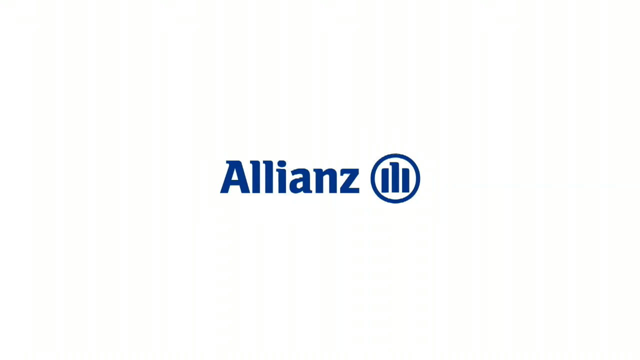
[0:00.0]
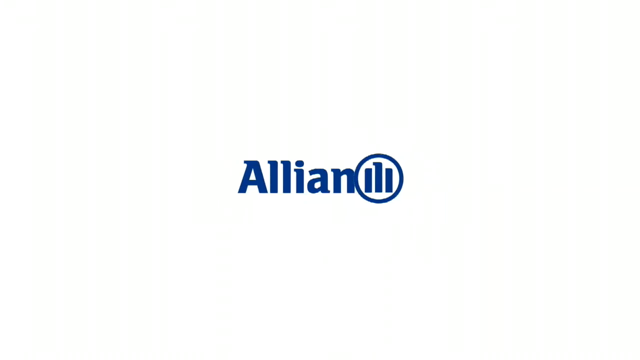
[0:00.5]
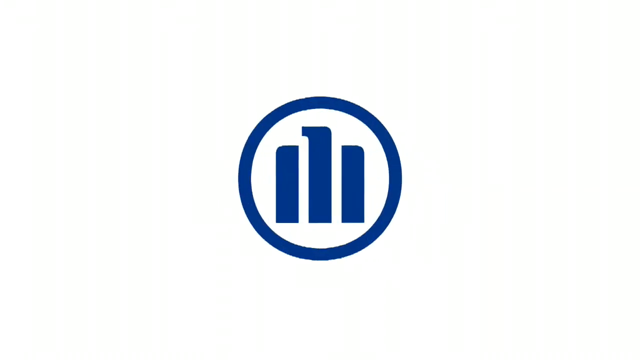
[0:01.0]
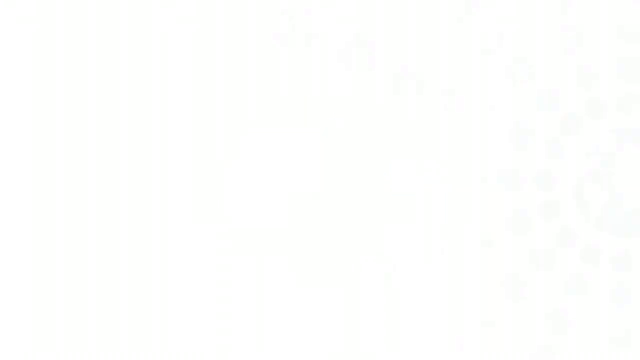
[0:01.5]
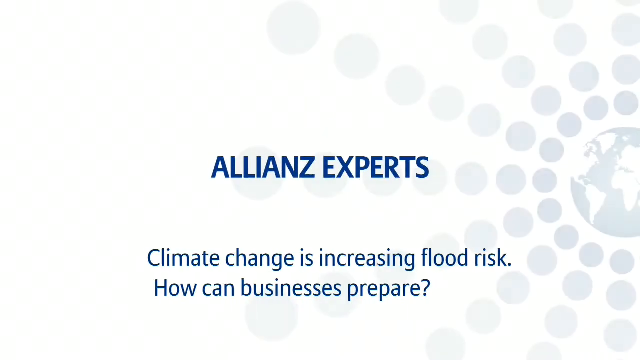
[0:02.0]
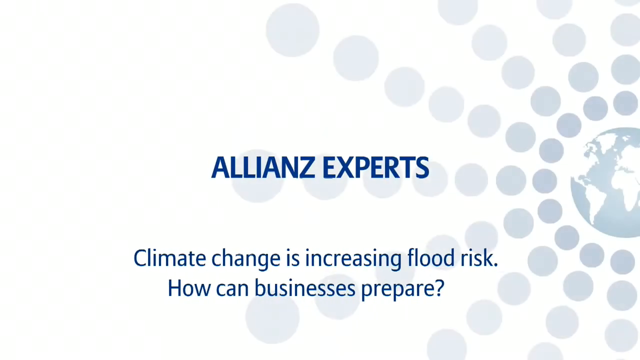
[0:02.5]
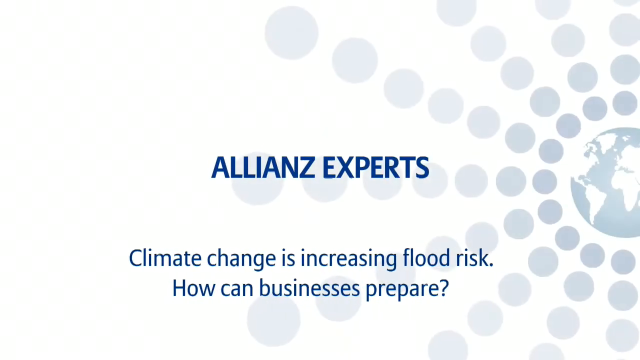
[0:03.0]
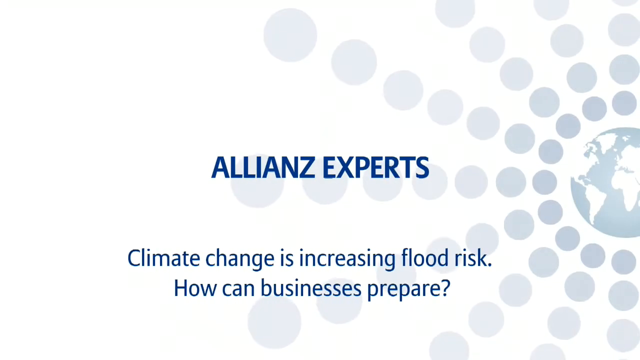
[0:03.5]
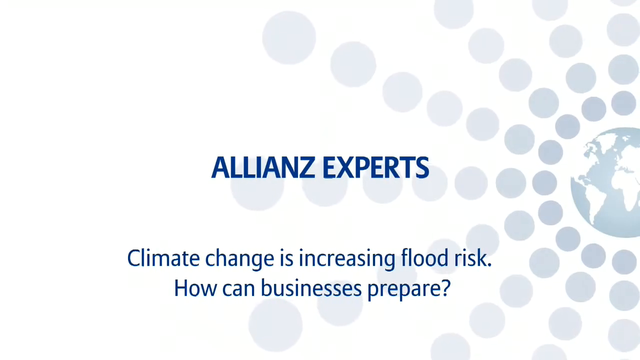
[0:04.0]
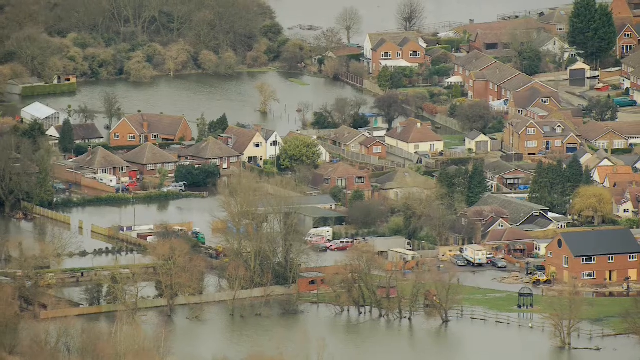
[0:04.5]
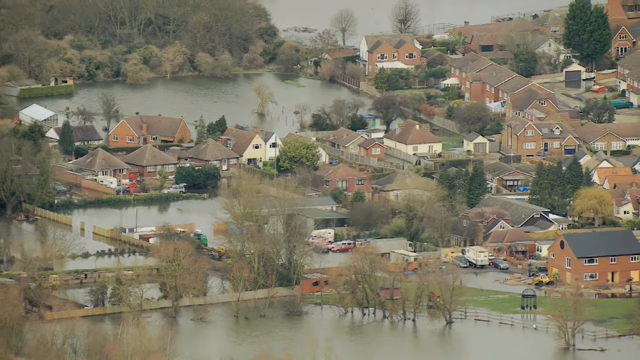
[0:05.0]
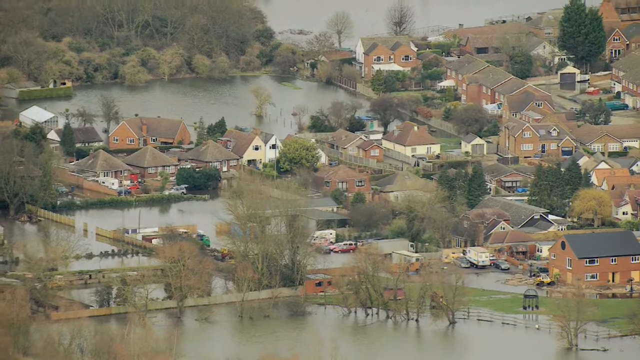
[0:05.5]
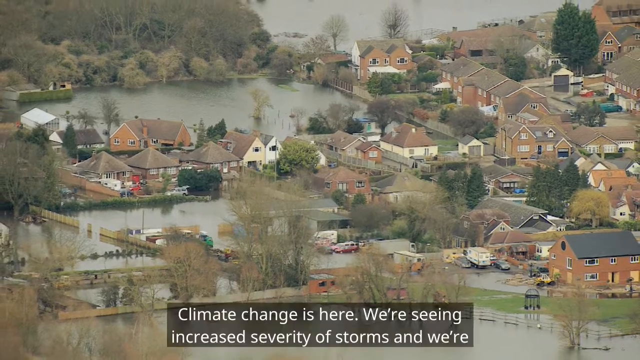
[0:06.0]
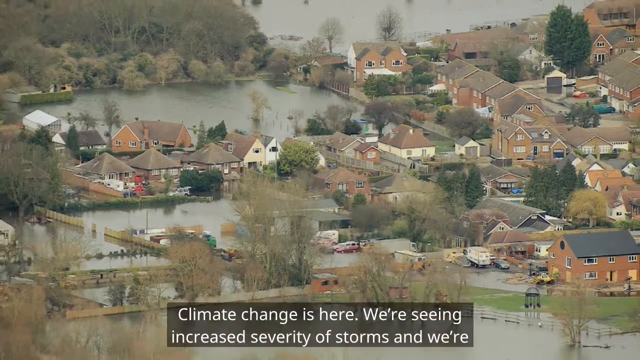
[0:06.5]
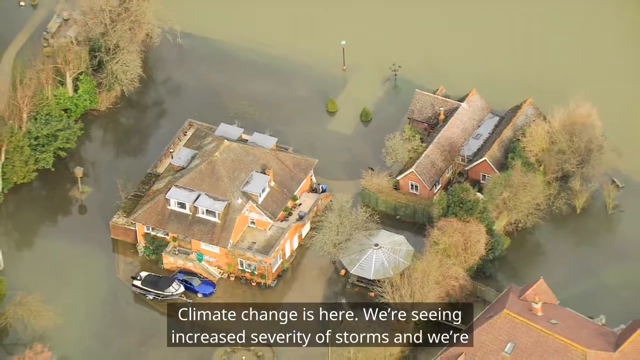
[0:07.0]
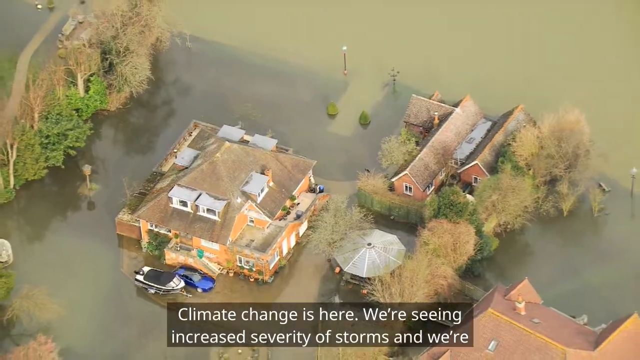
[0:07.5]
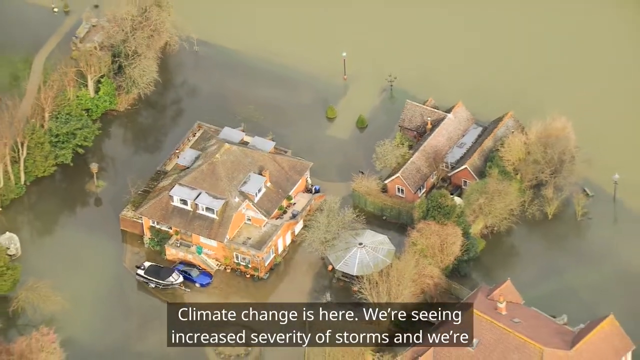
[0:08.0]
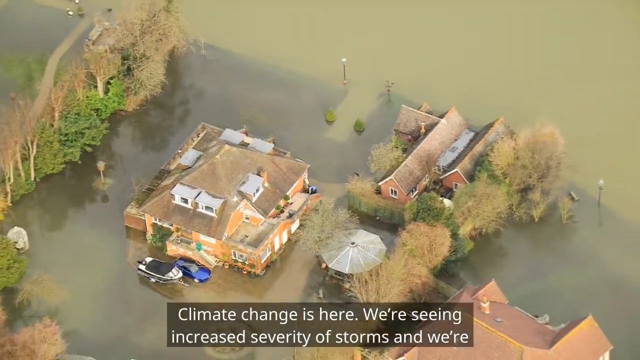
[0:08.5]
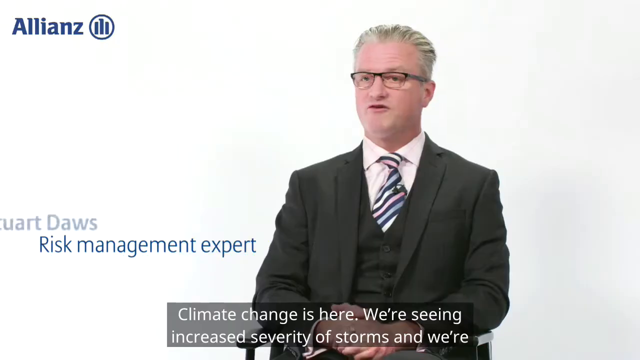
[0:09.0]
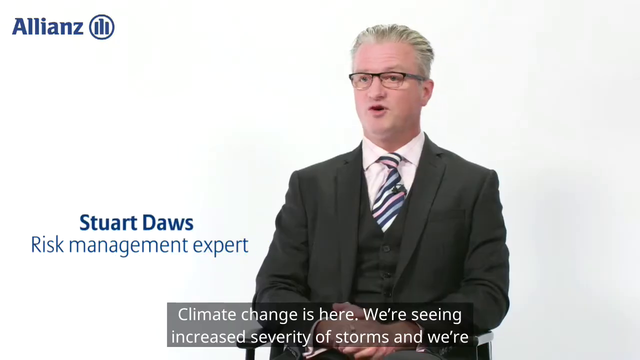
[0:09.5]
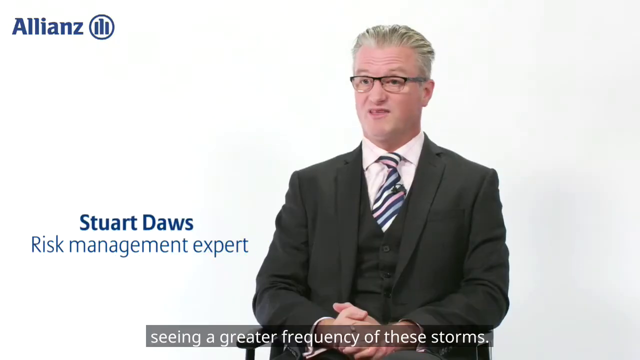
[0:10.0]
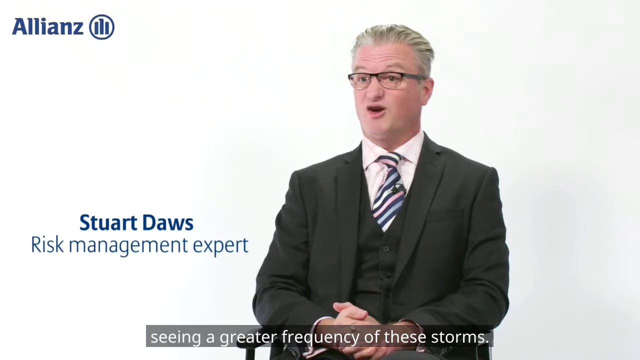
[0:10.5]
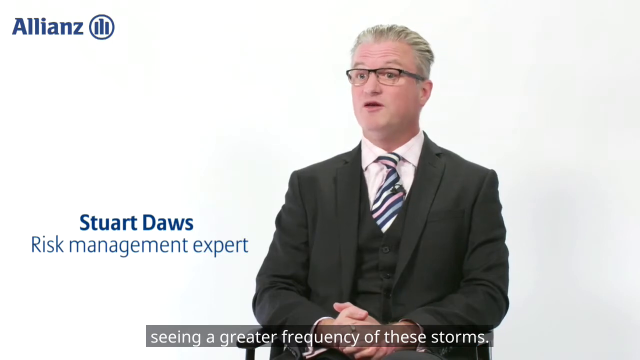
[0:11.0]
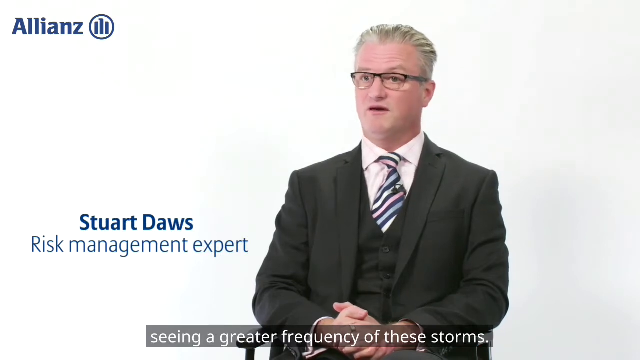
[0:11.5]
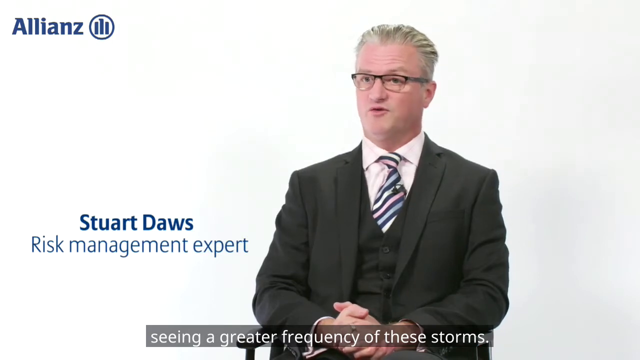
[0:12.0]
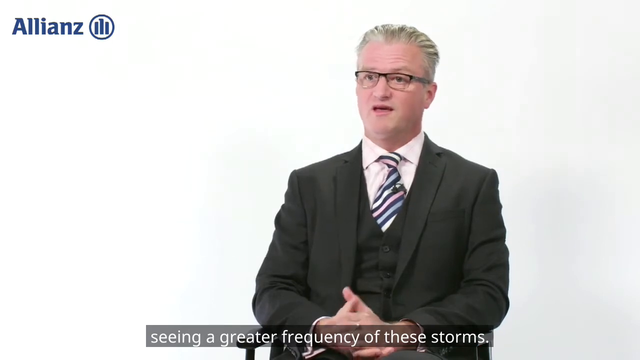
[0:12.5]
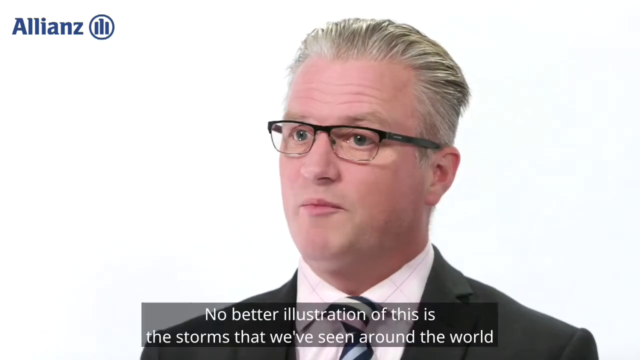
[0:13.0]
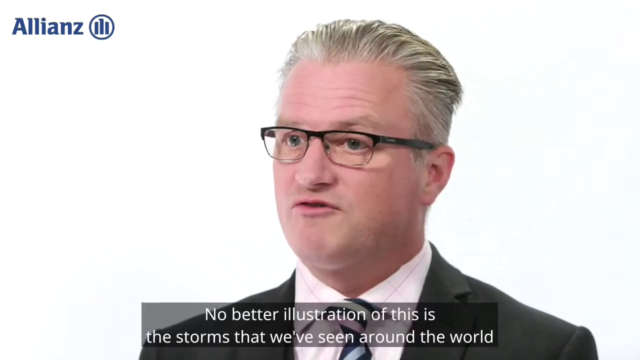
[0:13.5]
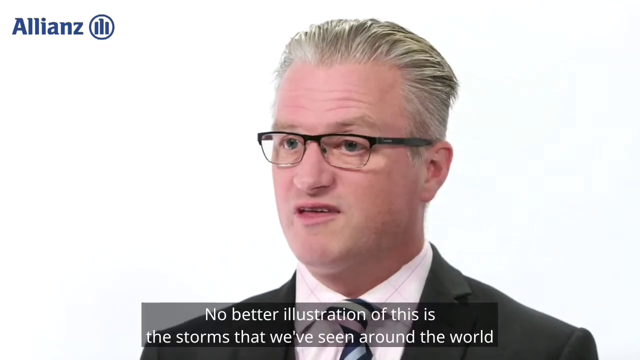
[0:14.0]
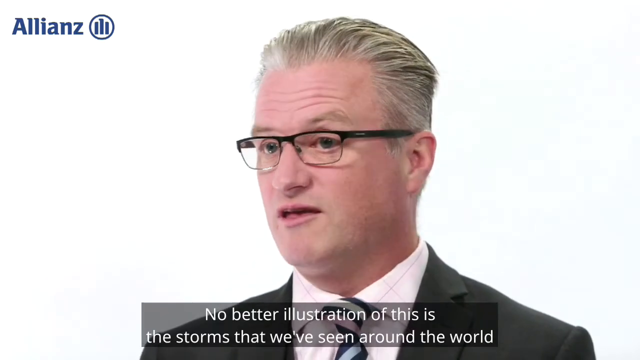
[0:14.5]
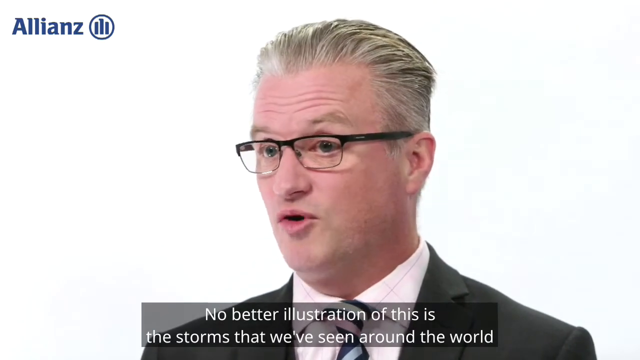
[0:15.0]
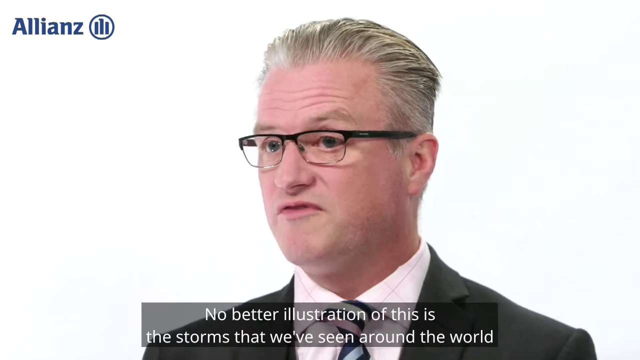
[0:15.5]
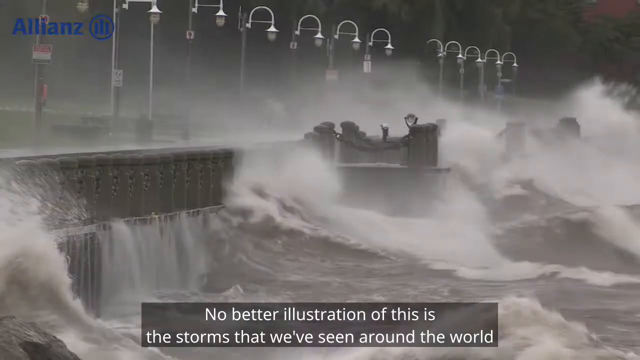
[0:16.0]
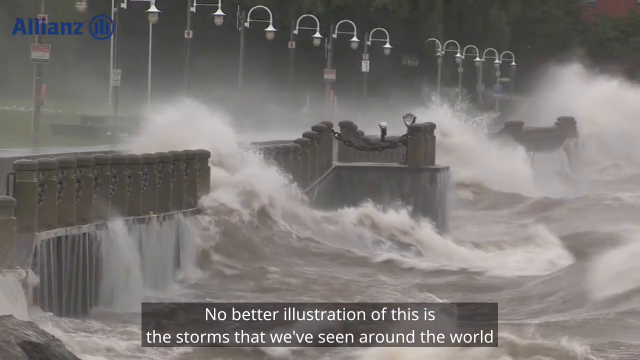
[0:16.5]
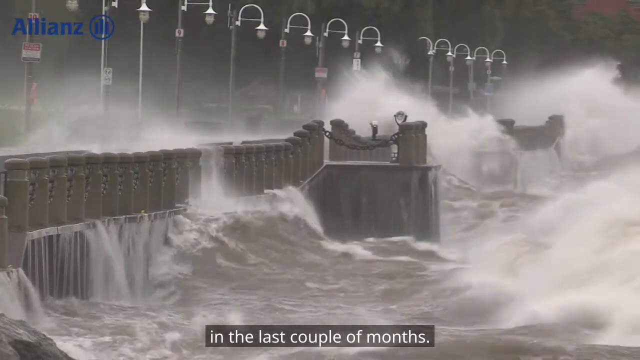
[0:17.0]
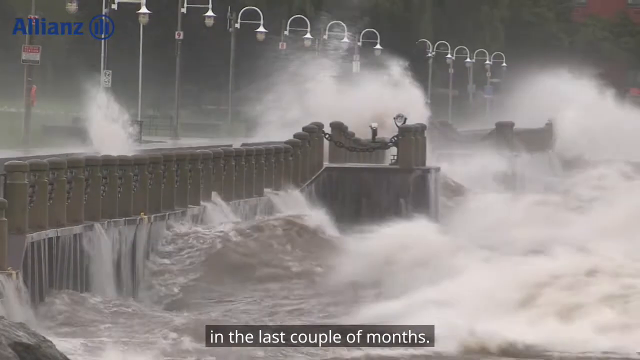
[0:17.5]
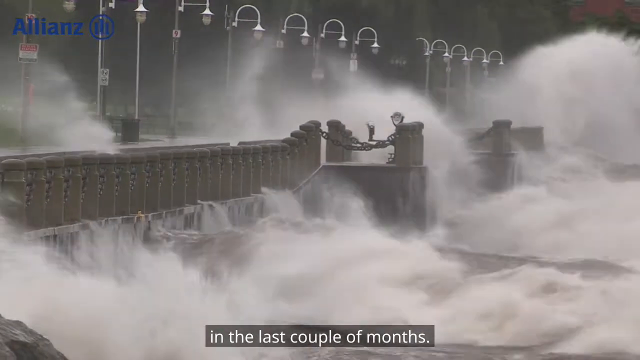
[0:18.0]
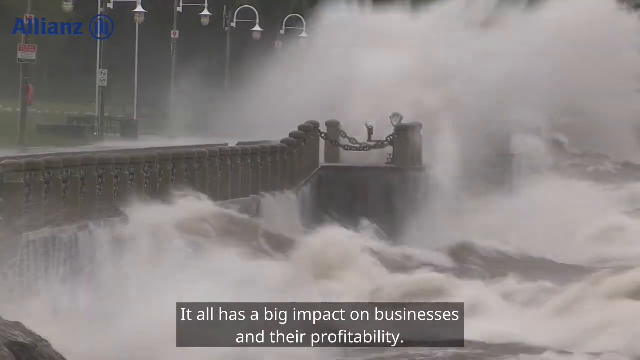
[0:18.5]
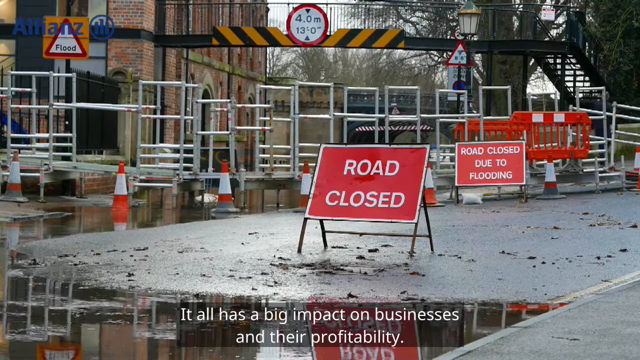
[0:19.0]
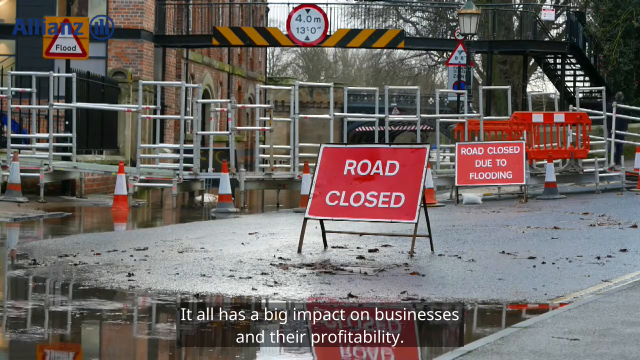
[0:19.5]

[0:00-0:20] The video opens with the company name, spelled ALLINZ, and the word "experts." Text then appears briefly: "climate change is increasing flood risk, how can businesses prepare?" A man named Stewart appears; his full name, Stewart Daws, is shown, and he is identified as a risk management expert. Fast-moving text reads "since climate change is here, we're seeing increased severity of storms, and we're seeing a greater frequency of the storms" and "it has a big impact on businesses and profitability." He wears a black suit, a white button-down collar shirt, and a tie that looks blue and white with pink and lavender-like stripes. He has dark-framed glasses and salt-and-pepper hair, more salt than pepper. His hands appear to be folded, with only the thumbs and fingertips visible.